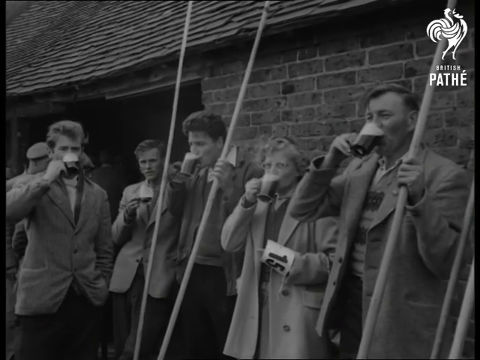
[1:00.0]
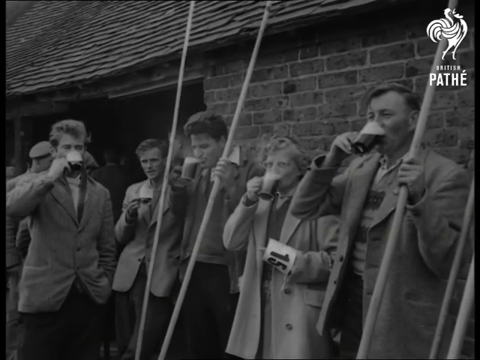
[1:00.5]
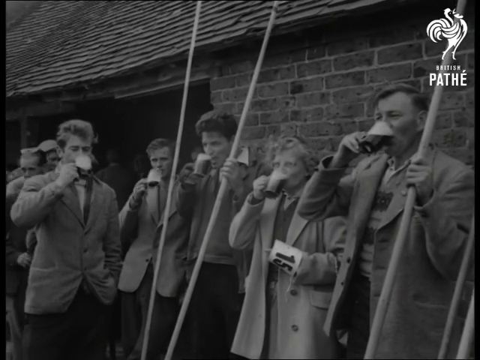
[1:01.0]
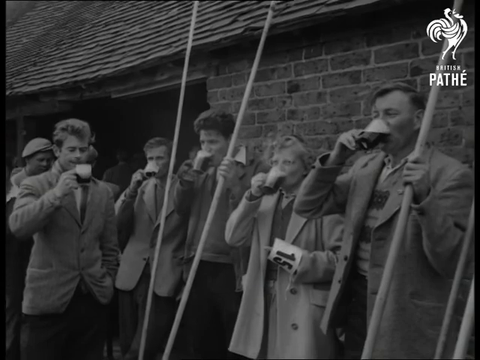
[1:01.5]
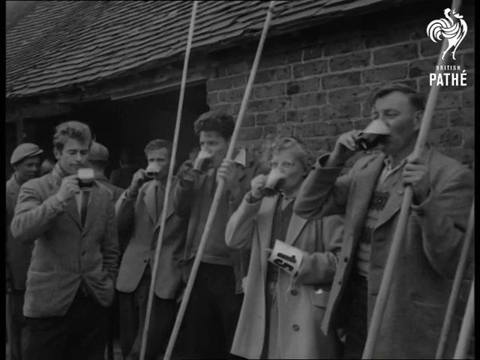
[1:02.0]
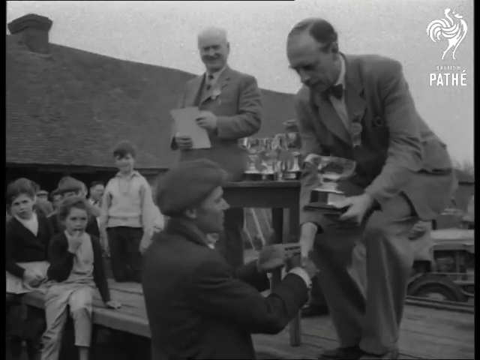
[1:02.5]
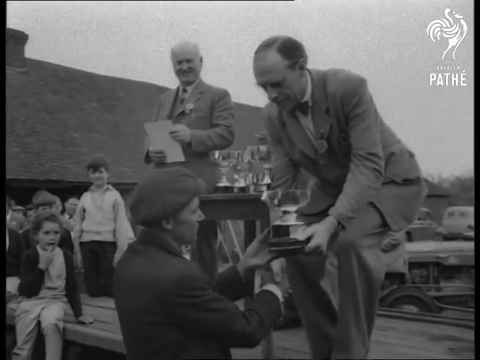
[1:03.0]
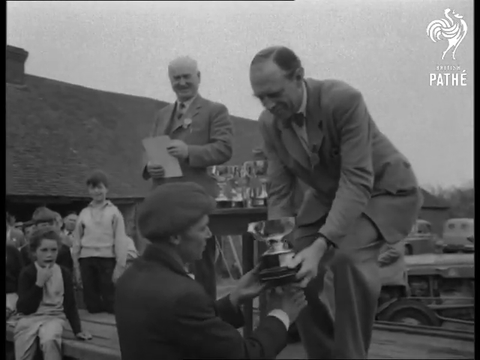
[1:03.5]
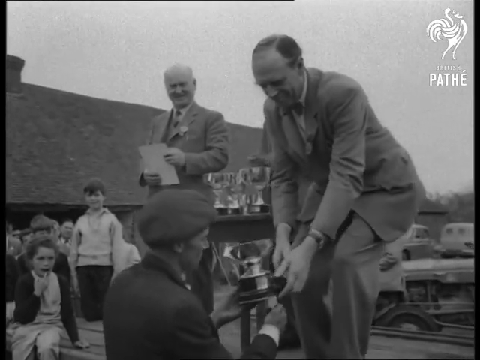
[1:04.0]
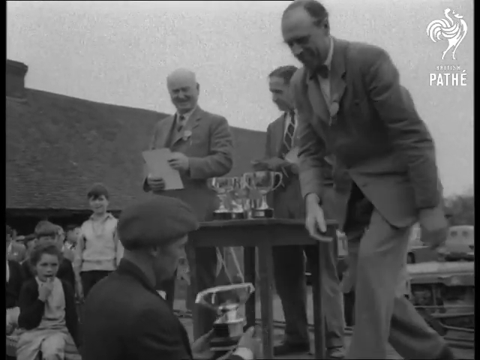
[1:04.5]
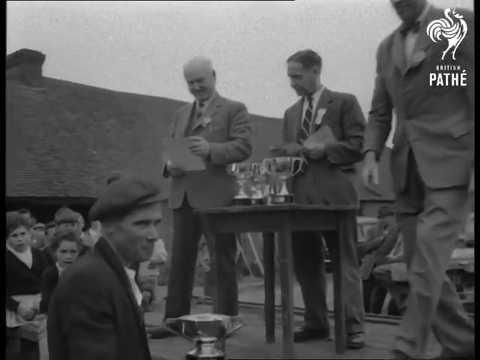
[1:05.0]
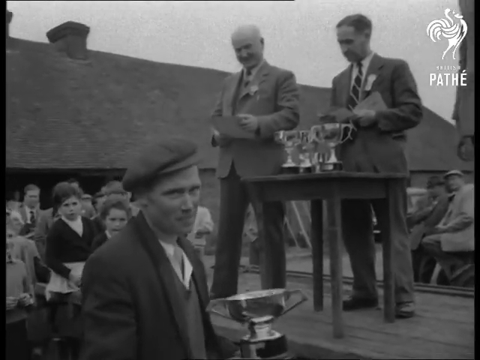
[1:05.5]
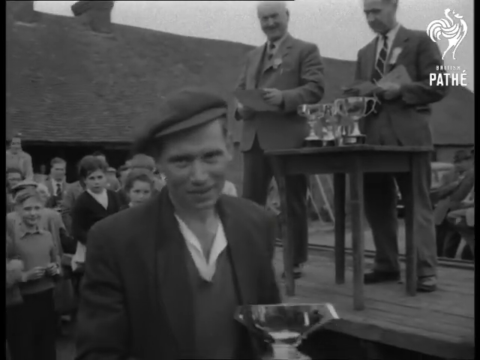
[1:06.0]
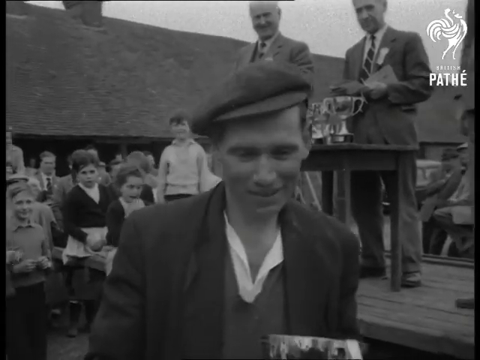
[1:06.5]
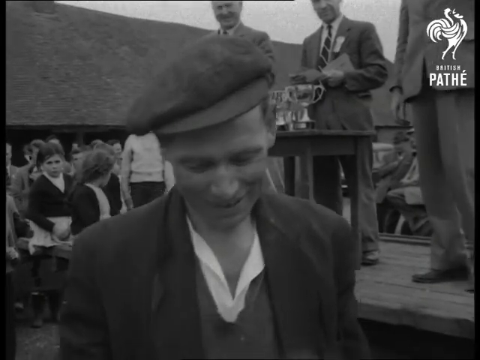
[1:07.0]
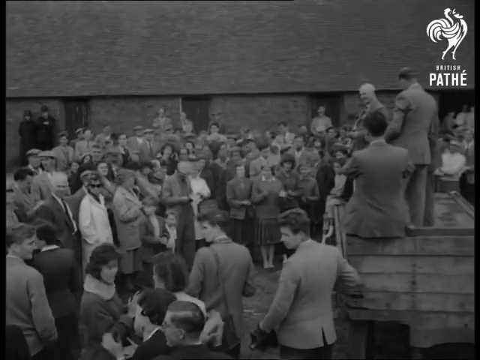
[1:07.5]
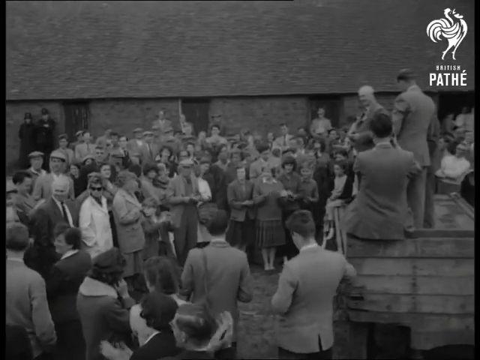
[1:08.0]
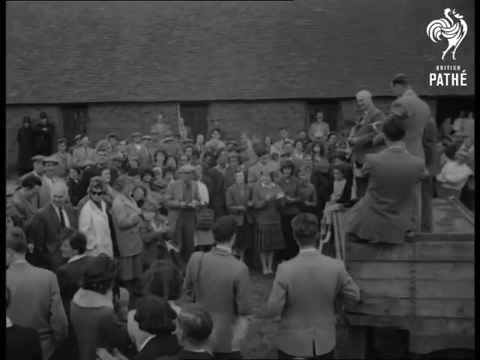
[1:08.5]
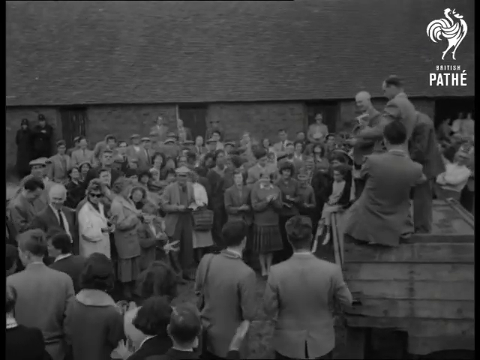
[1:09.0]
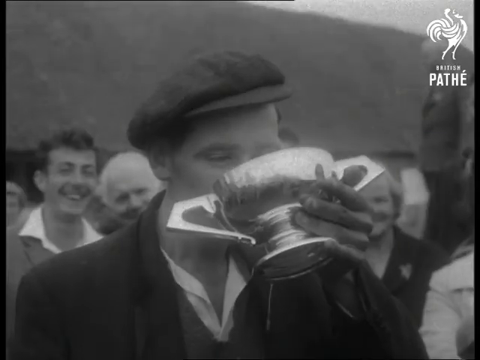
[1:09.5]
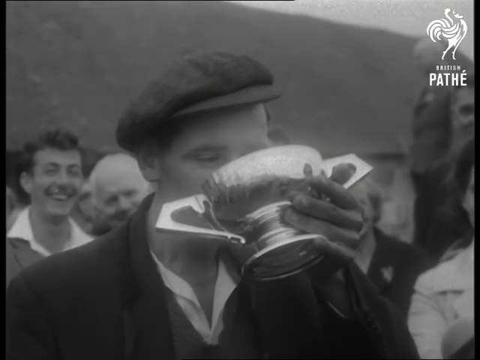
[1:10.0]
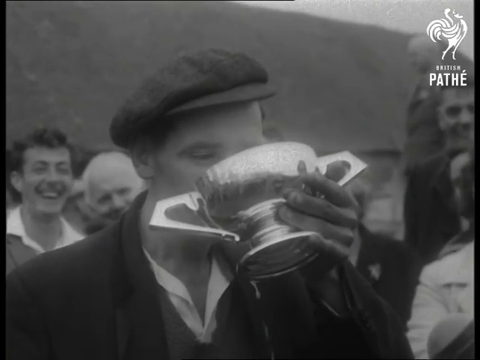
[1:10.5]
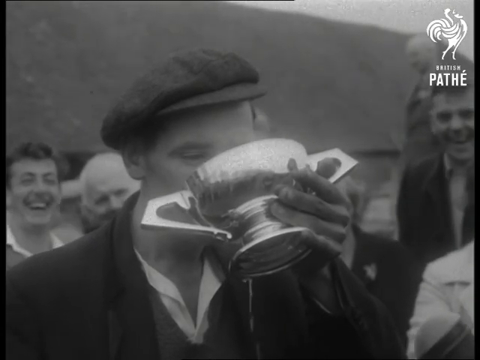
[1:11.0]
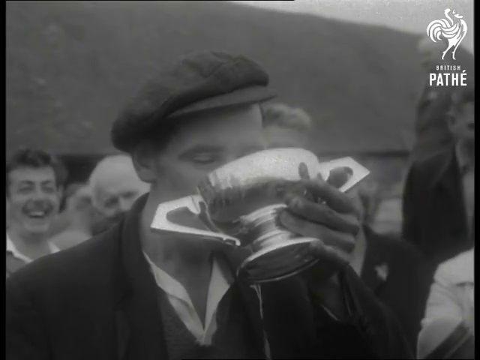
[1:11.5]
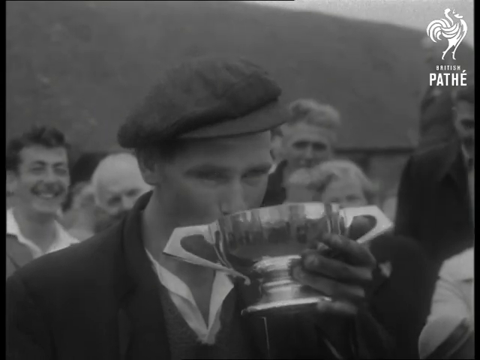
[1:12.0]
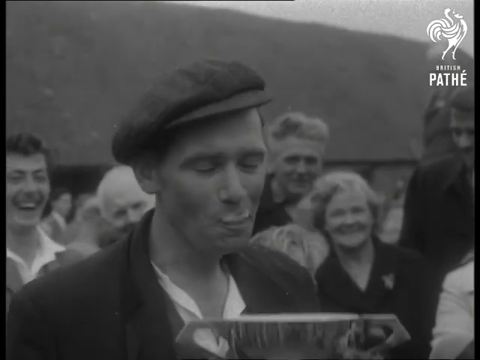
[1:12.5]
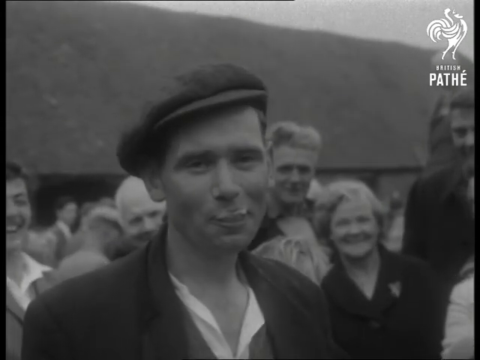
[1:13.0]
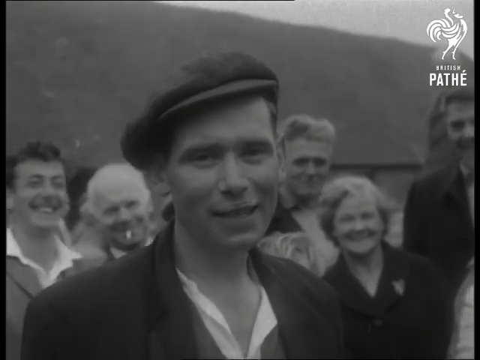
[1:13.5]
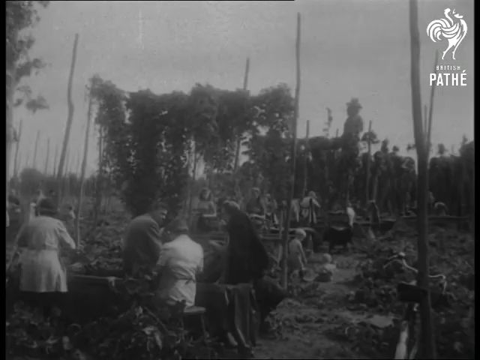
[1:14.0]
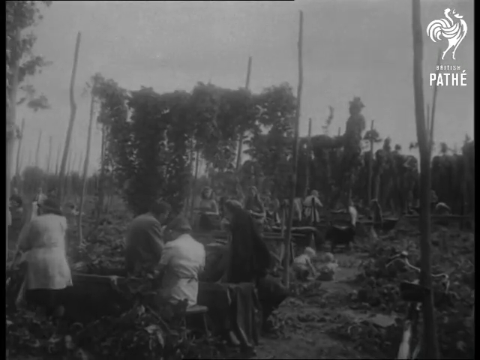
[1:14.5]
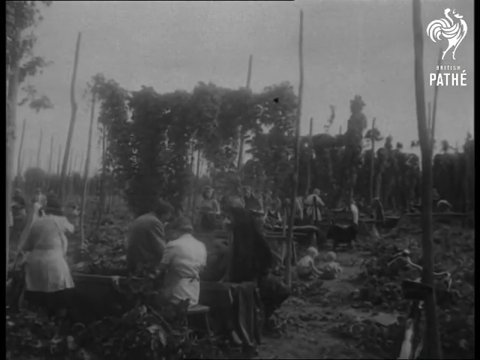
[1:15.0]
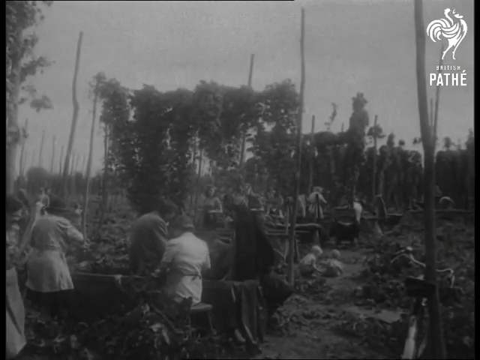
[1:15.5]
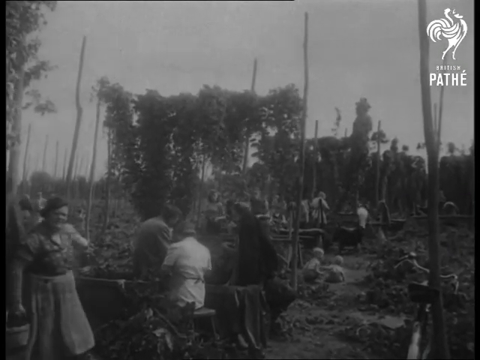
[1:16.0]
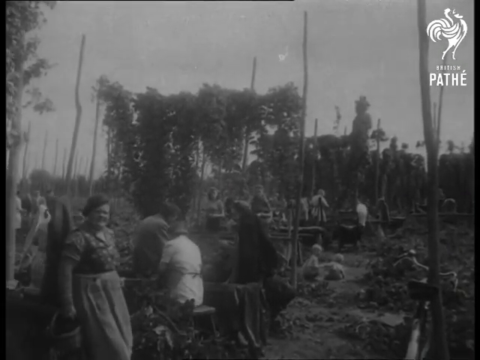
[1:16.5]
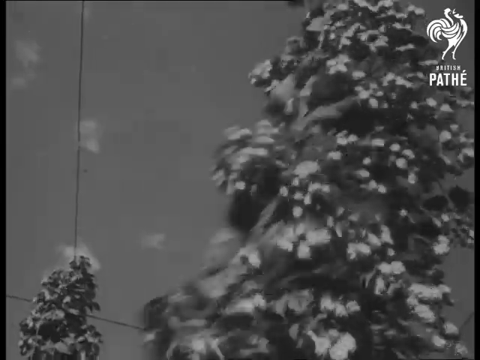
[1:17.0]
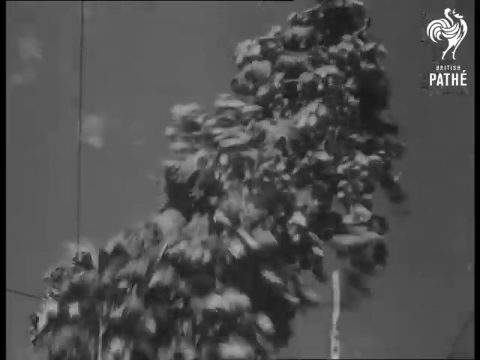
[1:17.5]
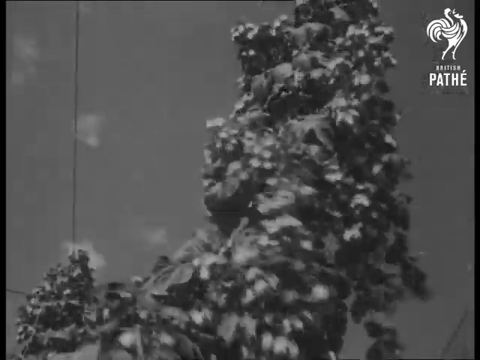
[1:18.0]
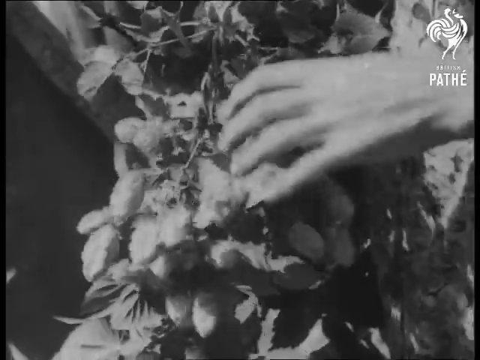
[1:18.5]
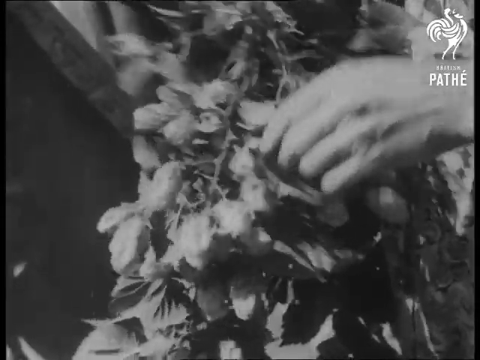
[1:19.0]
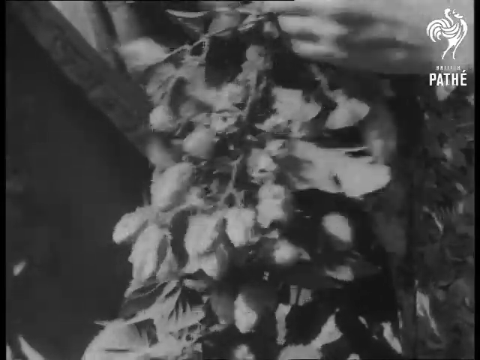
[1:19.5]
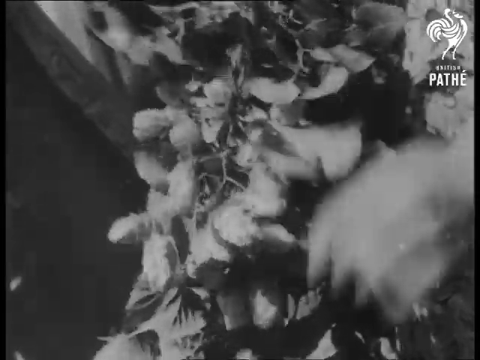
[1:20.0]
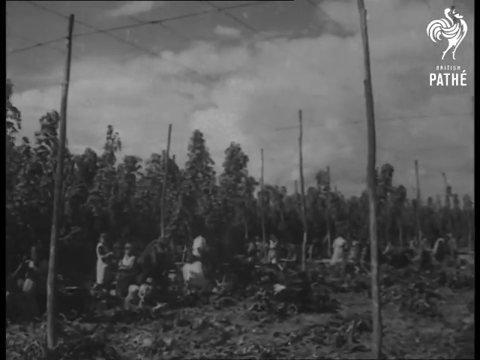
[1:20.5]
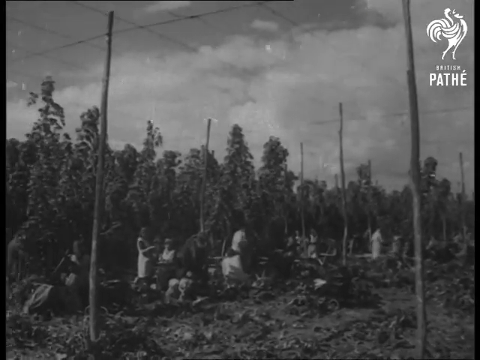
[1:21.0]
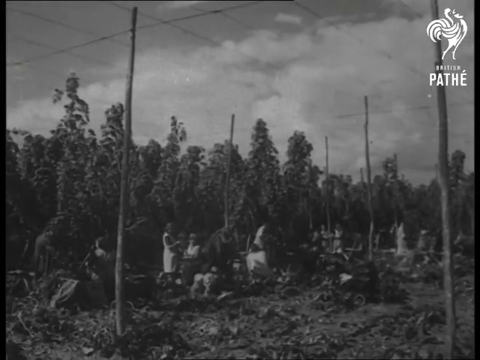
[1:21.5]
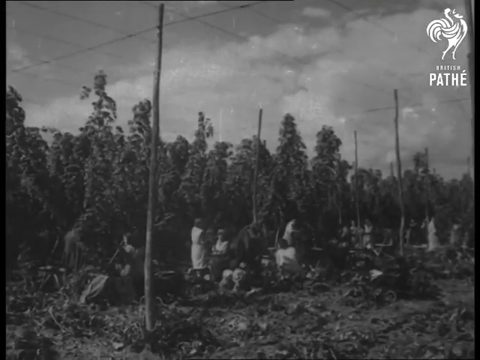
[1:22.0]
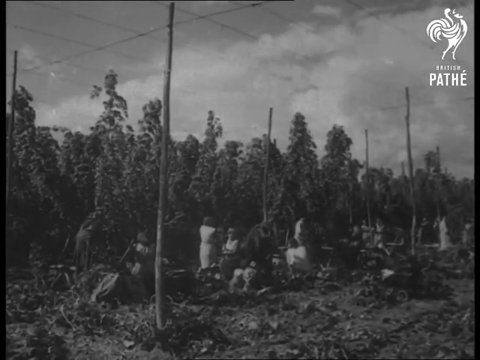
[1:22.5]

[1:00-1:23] A small group of people observe while drinking coffee, and outside there is a building that looks like a house. Shots of different angles of the village follow rapidly. A man appears to be the winner of the championship, and people are congratulating the participants. The setting is an open field. Near the end, people use a pole to get things off a plant, with the focus on the plant and the picking.